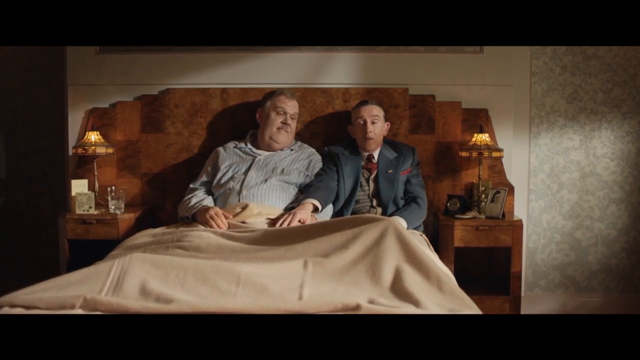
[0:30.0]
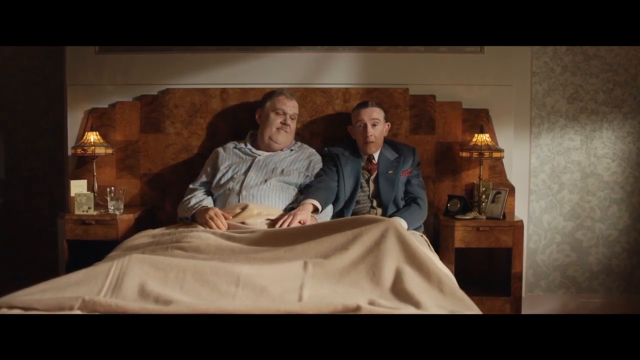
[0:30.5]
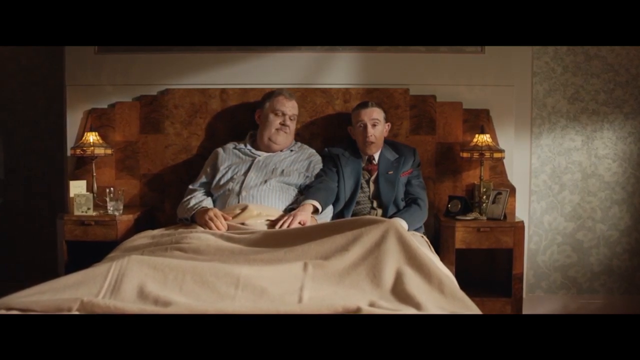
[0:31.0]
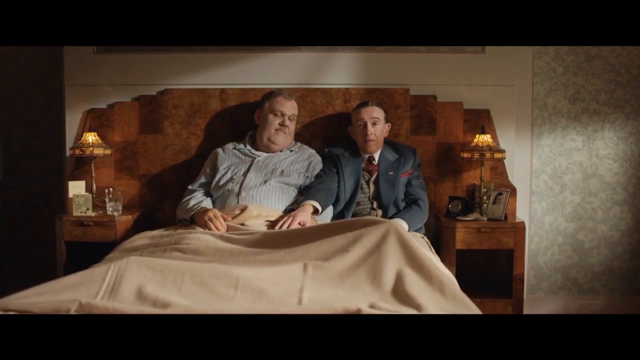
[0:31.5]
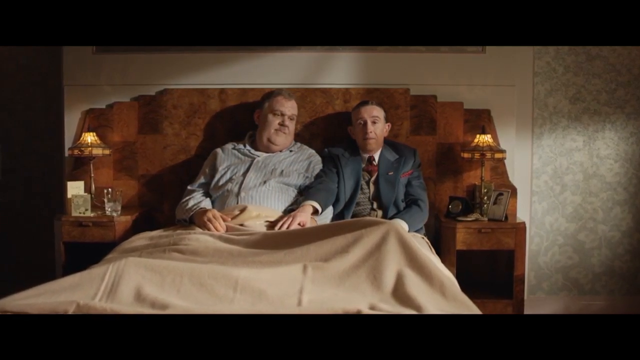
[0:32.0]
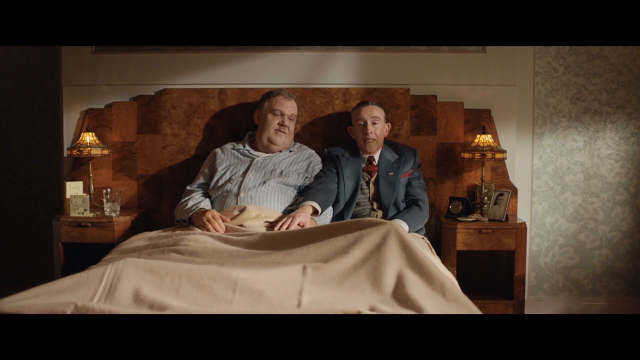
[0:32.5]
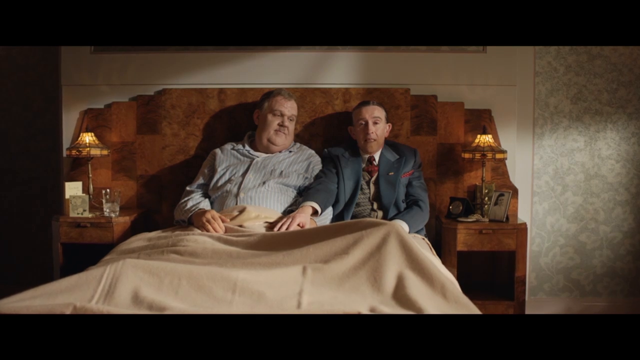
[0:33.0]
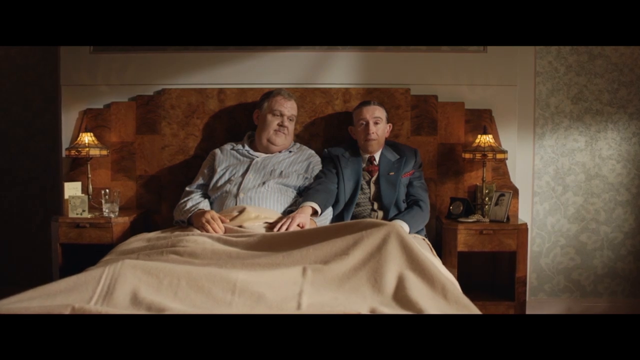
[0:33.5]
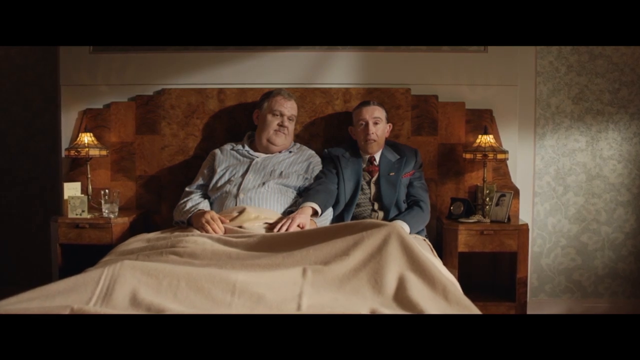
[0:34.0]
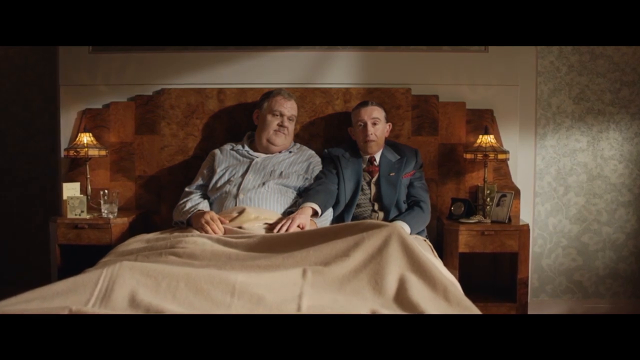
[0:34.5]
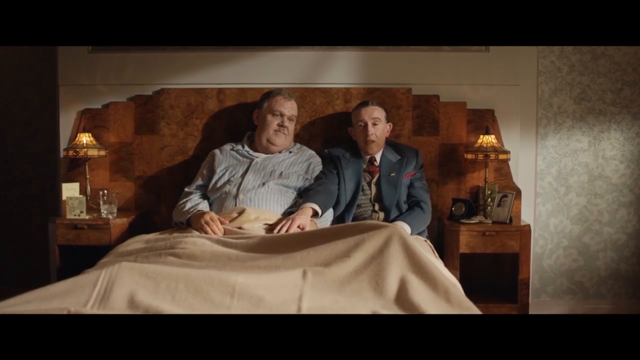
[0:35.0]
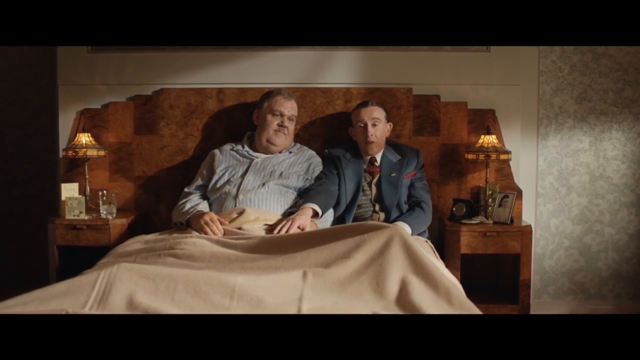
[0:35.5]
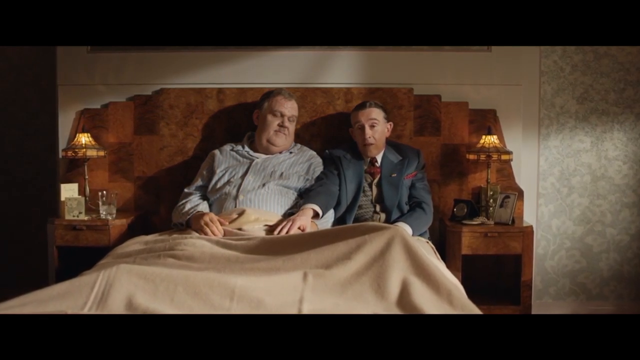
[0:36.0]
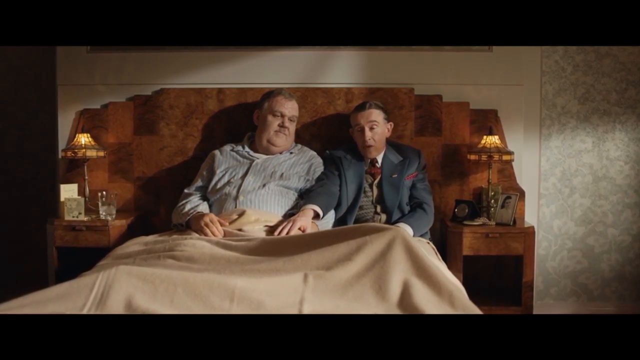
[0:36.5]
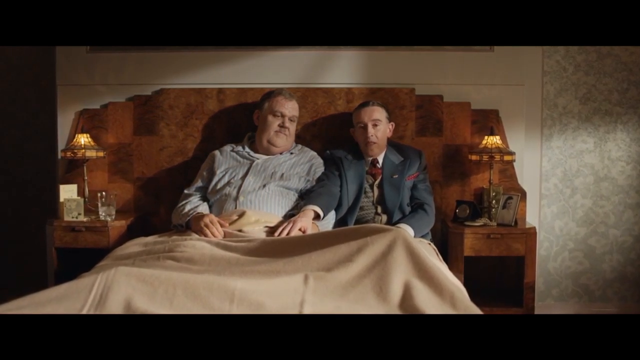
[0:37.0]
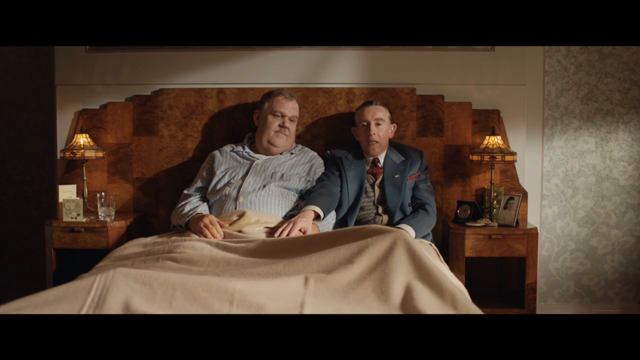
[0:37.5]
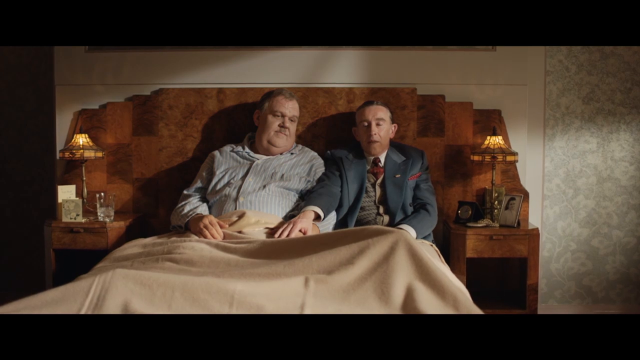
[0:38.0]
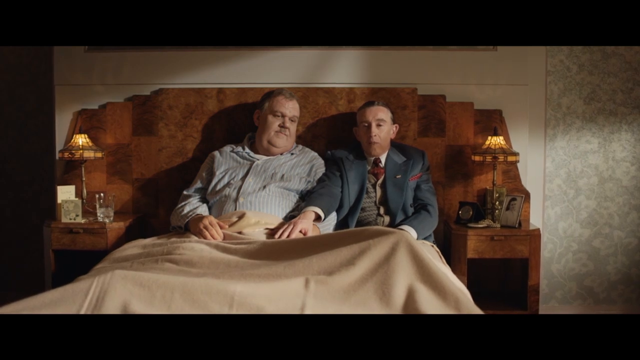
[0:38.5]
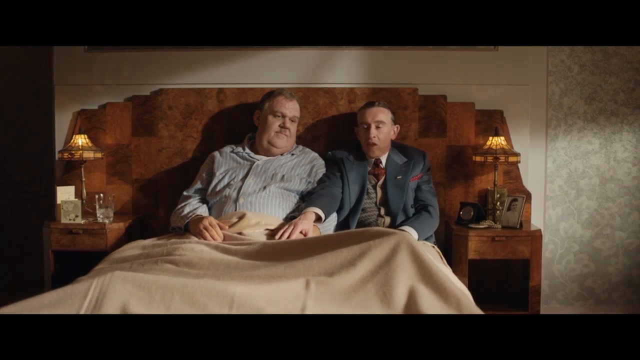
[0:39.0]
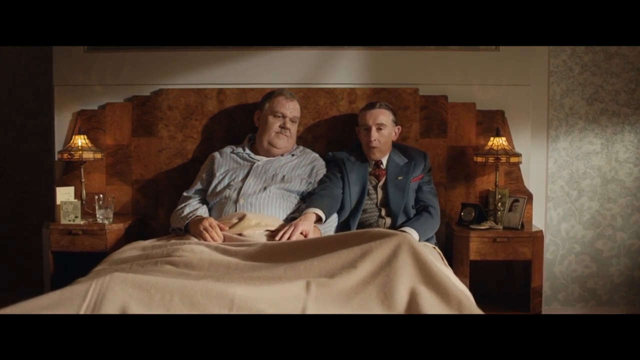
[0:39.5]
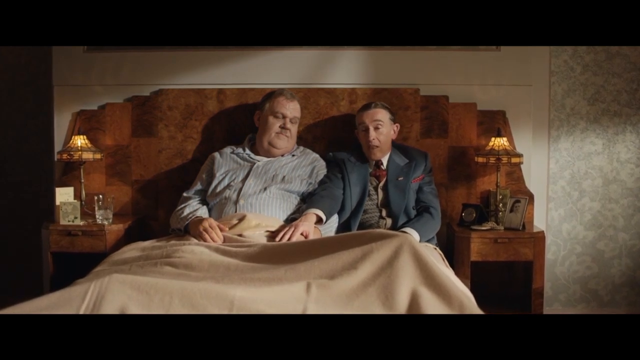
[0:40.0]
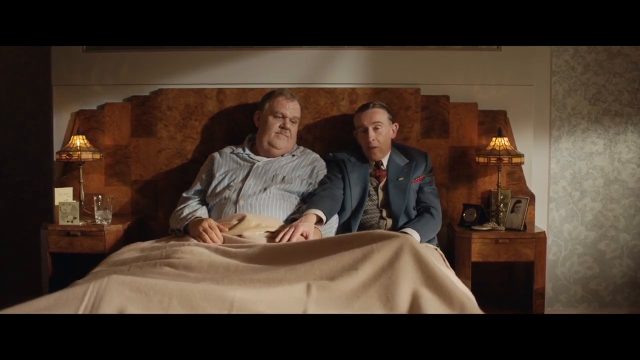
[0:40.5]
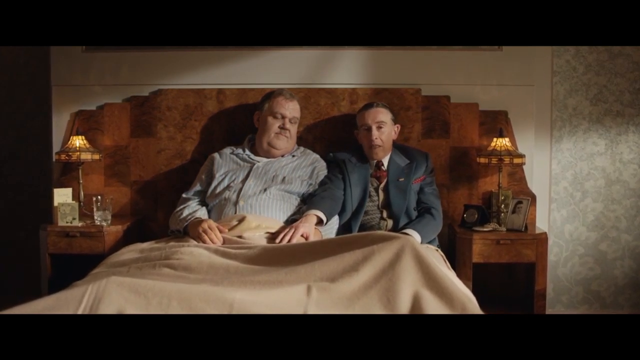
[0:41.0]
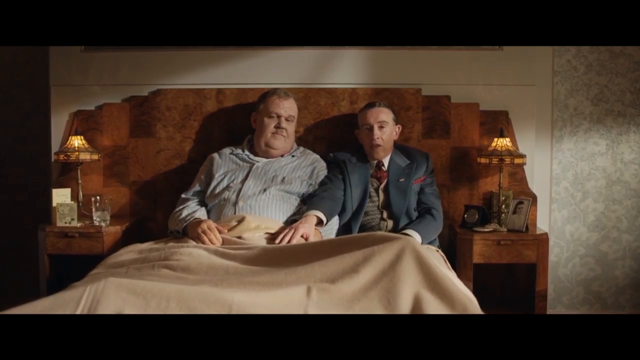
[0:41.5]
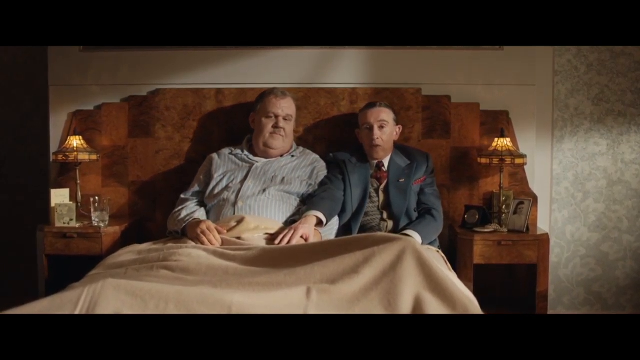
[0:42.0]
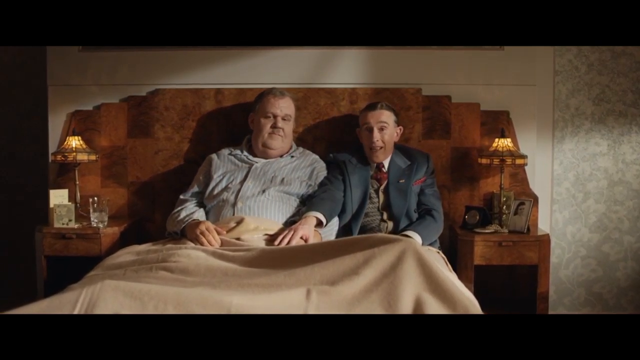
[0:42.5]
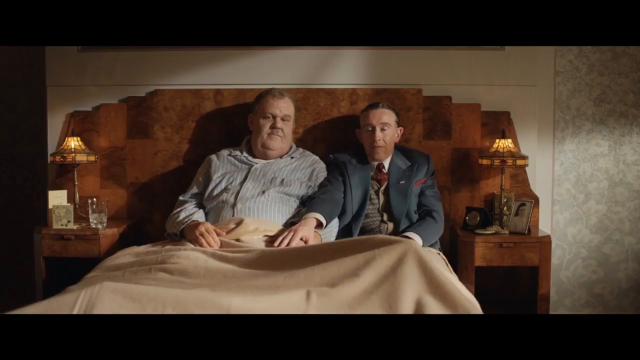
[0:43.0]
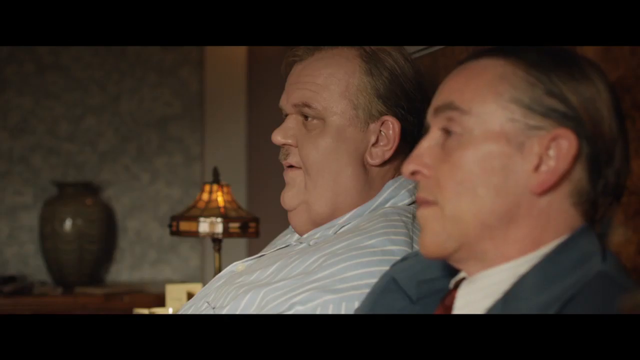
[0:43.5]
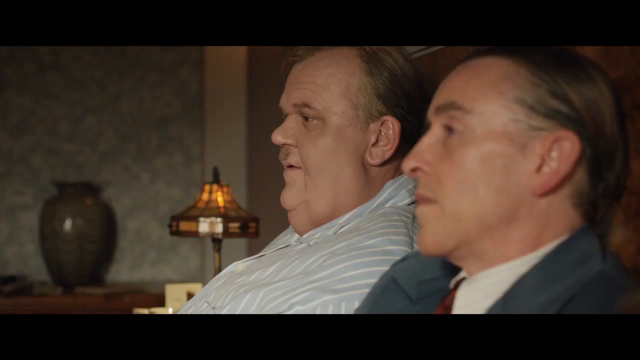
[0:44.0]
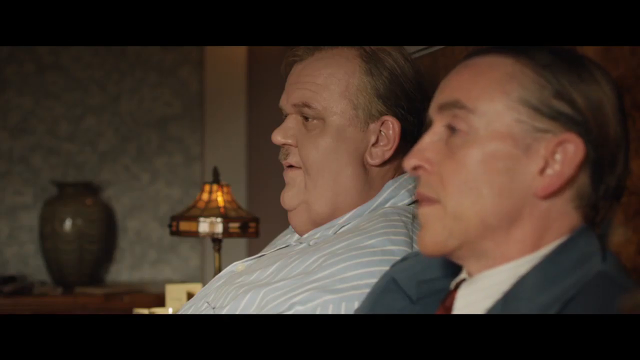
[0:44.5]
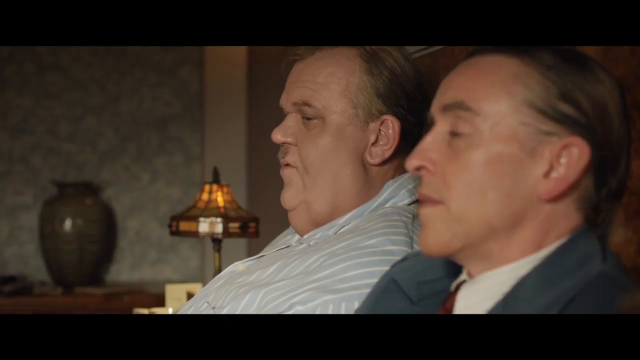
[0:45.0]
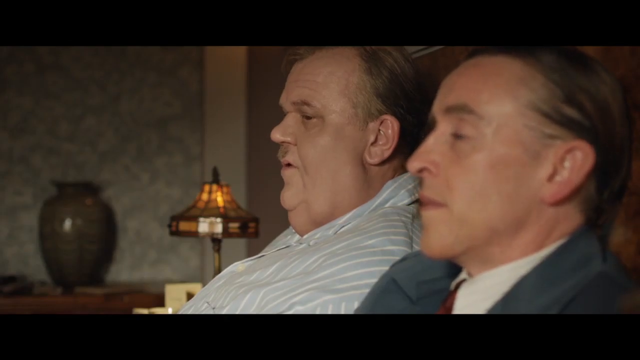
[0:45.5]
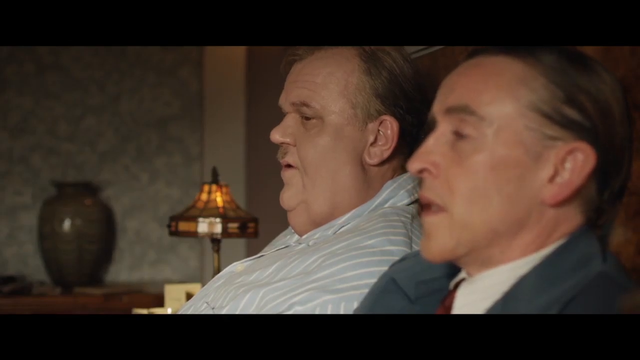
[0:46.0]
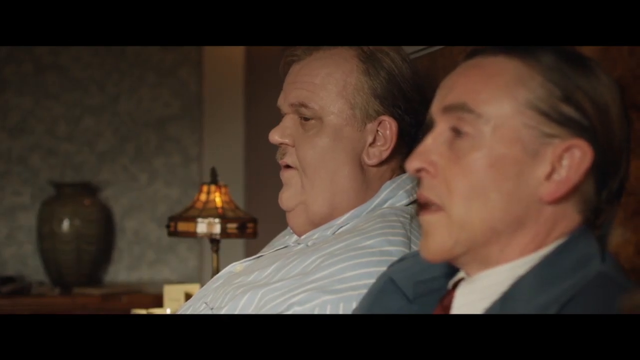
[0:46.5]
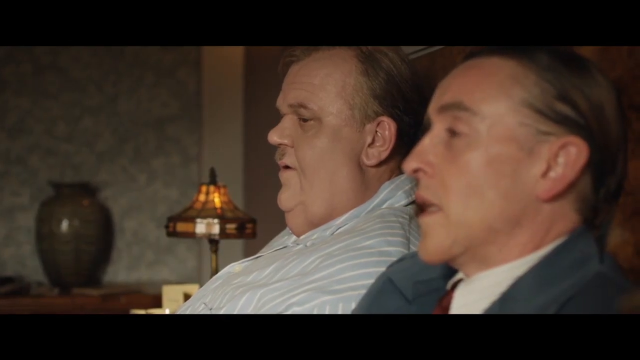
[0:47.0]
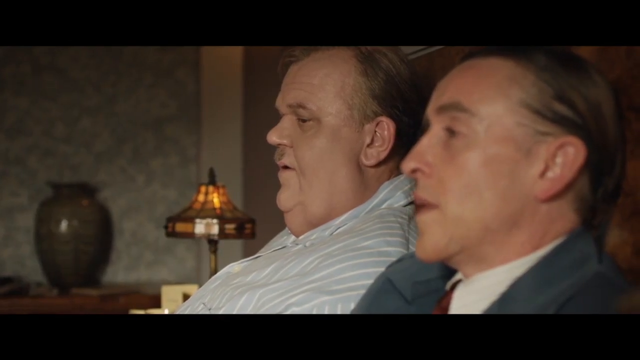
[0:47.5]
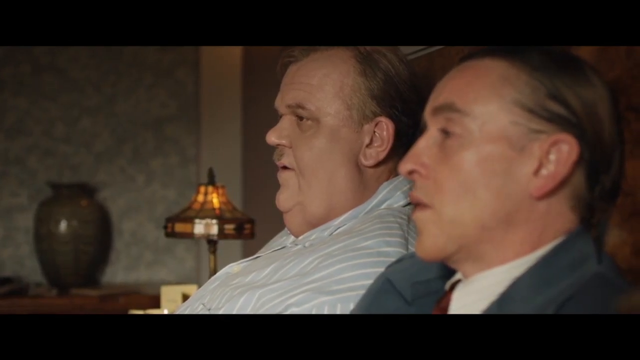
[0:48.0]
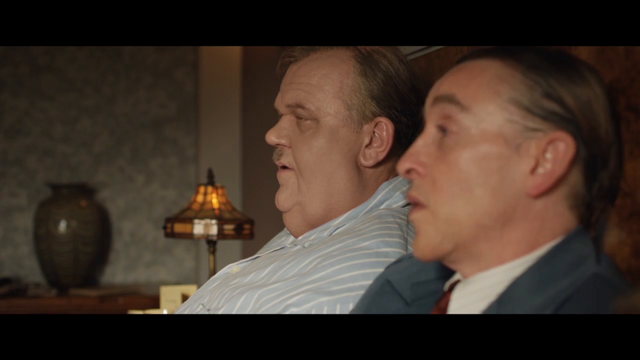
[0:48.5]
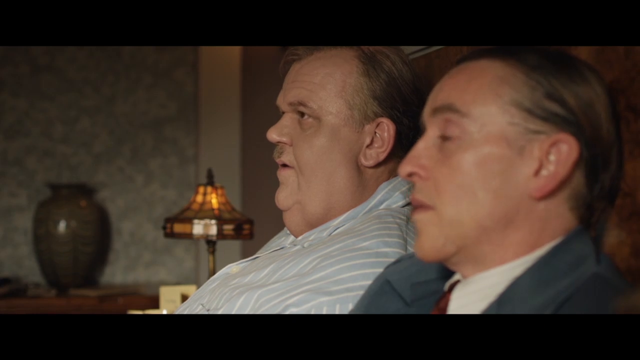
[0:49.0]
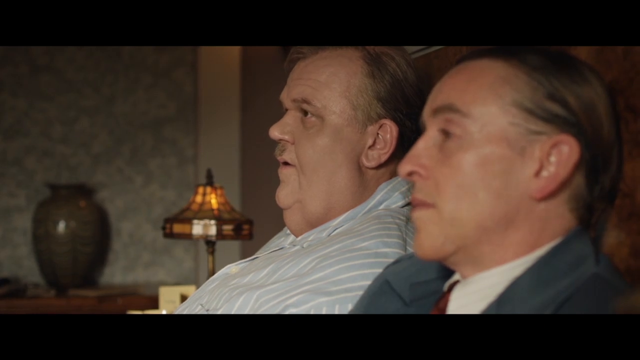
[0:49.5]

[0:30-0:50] The heavyset middle-aged man looks to his left, slightly downward at about a 10-degree angle. The thin man looks directly forward and speaks, his mouth opening and closing multiple times while his eyebrows lift and lower three times. The camera changes angle to a zoomed-in side view of the left side of both men's faces. The thin man, his hair slicked back, looks straight forward and blinks once. The heavyset man, in blue and white striped pajamas, looks forward and then glances out of the corner of his eye at the thin man. The thin man blinks, opens his mouth to speak, blinks again and lifts his eyebrows. In the background, behind the brown glass lamp on the nightstand, a desk with a green vase reflecting a white light is visible; the vase appears to be about 16 inches tall and 14 inches in diameter.